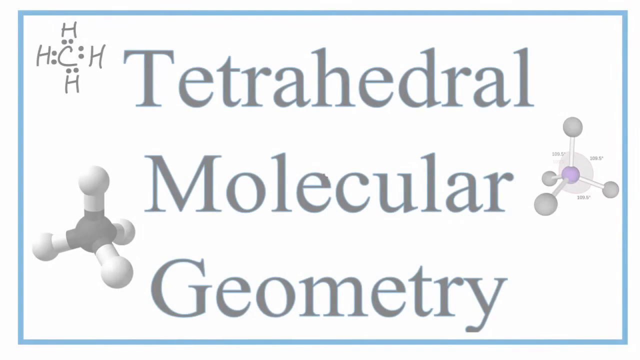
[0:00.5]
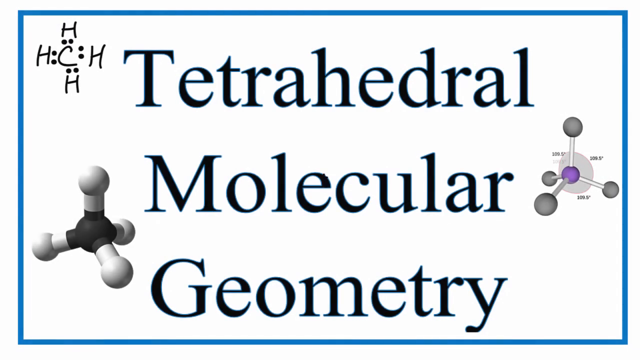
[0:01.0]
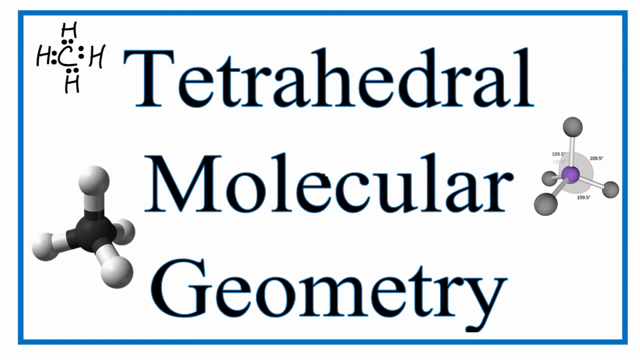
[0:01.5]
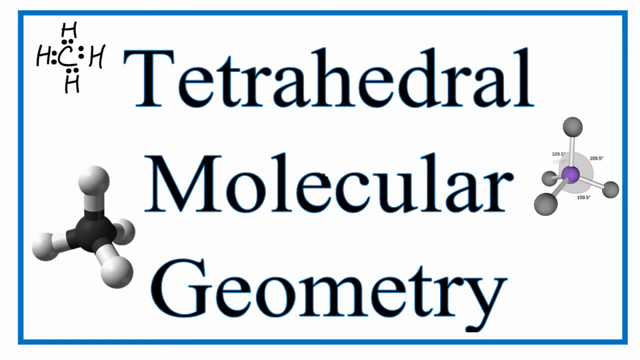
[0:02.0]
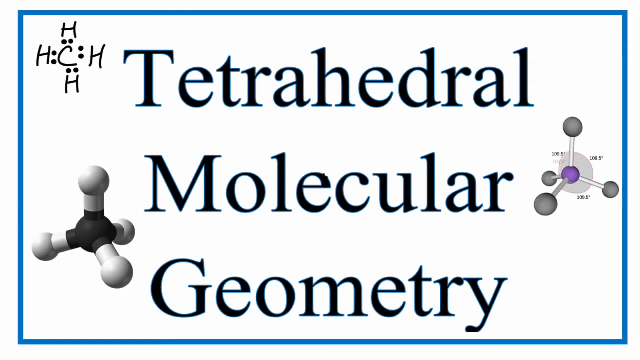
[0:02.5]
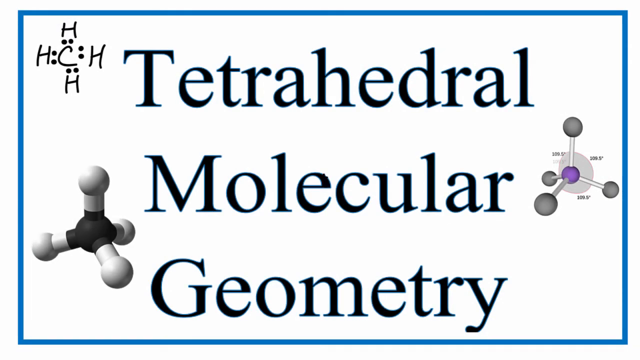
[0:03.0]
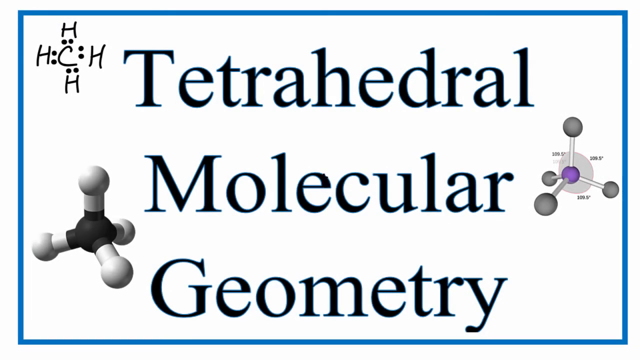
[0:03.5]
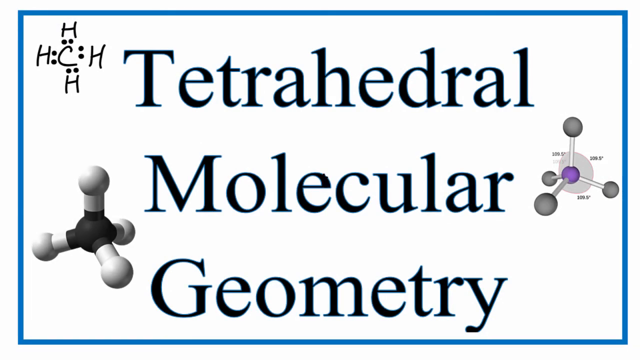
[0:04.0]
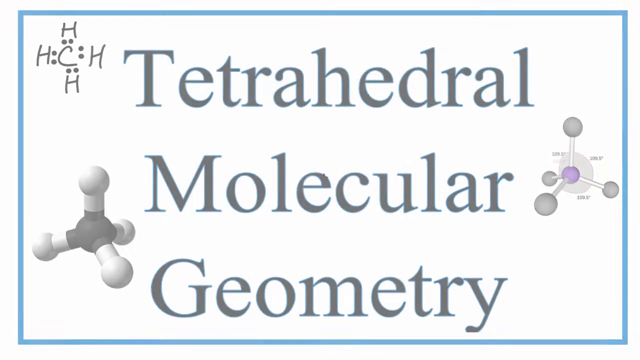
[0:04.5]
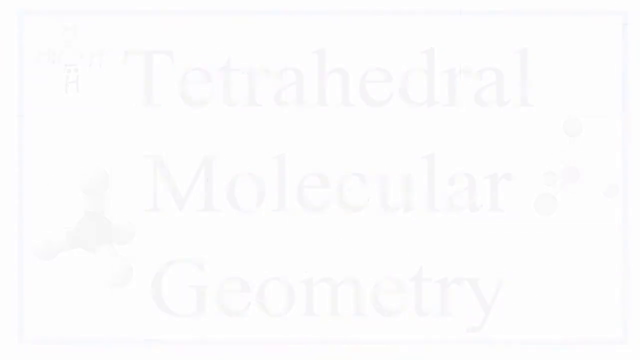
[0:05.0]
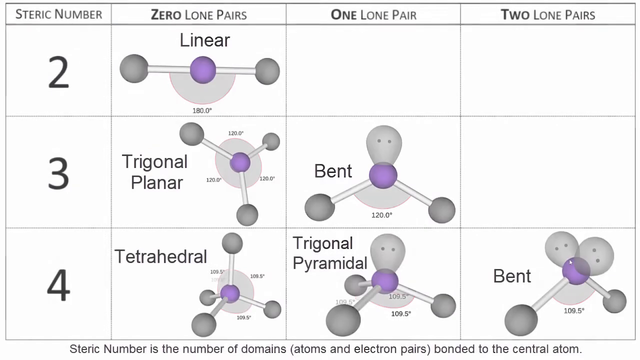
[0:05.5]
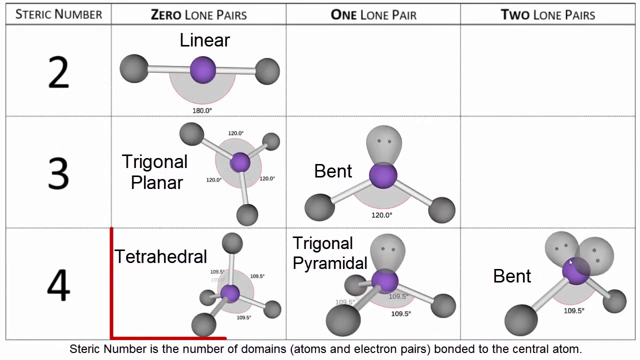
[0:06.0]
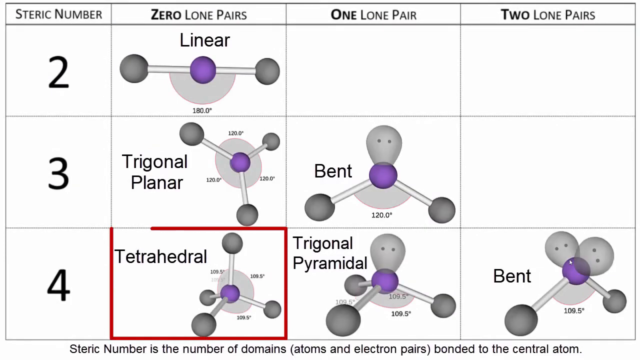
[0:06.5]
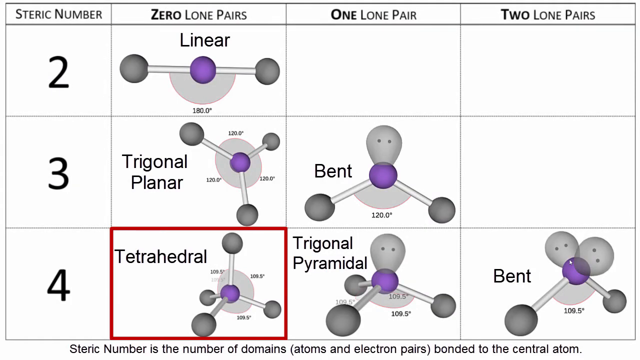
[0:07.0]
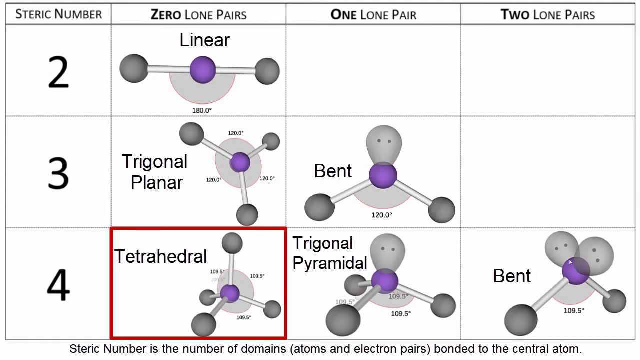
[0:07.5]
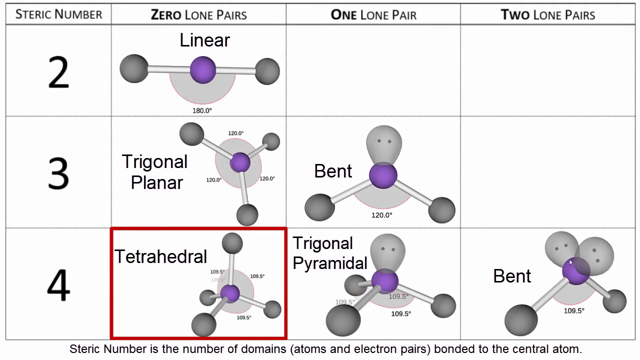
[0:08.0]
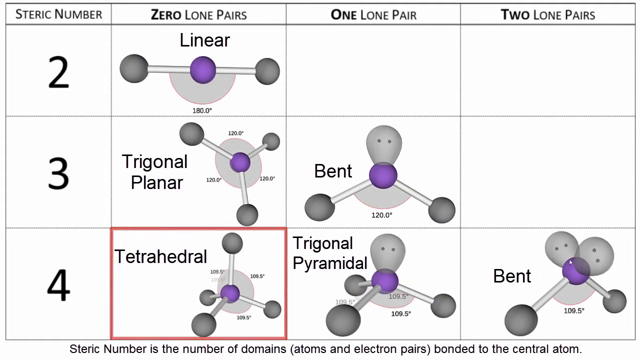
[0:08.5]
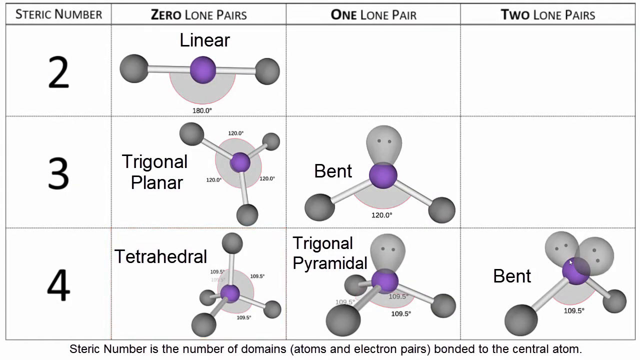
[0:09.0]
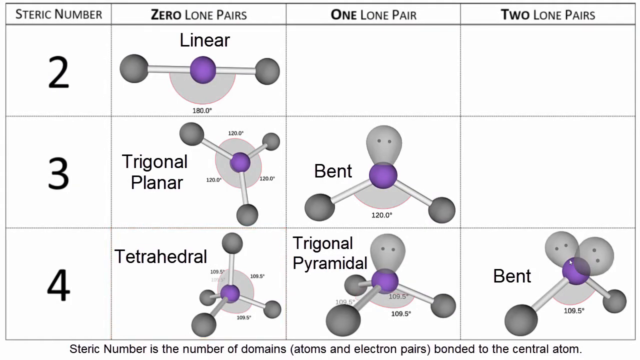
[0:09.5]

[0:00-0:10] The video deals with tetrahedral molecular geometry and opens on a title slide showing three different representations of the methane molecule, chemical formula CH4: a Lewis dot structure, a space-filling ball model, and a schematic of the ball model with angles. The image then transitions to a table of the different bond shapes that can be formed. The table has three rows. Steric number two has only one form, with zero lone pairs. Steric number three has two forms: zero lone pairs, which is triagonal planar, or one lone pair, which is bent. Steric number four has three forms: zero lone pairs, which is tetrahedral; one lone pair, which is triagonal pyramidal; or two lone pairs, which is bent. A red box forms around the square containing the tetrahedral model, indicating that it will be the focus of the video.